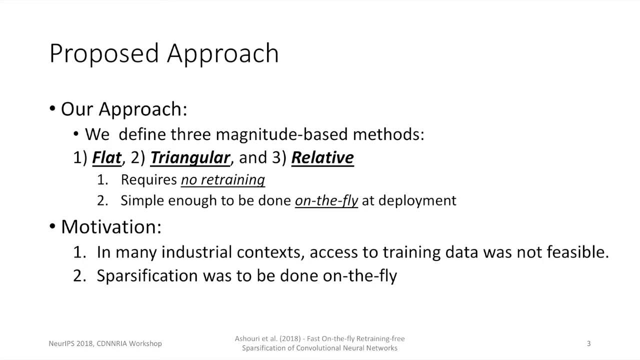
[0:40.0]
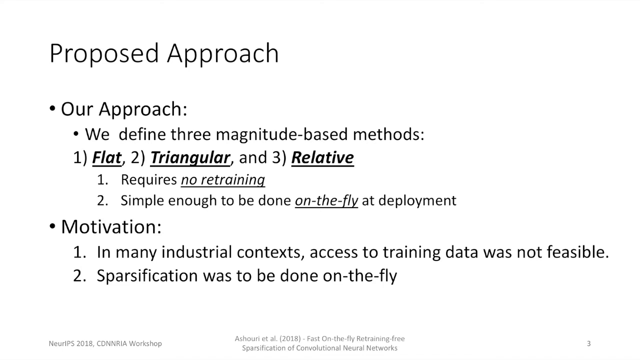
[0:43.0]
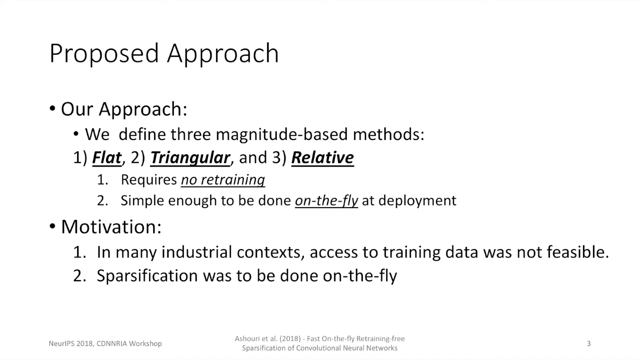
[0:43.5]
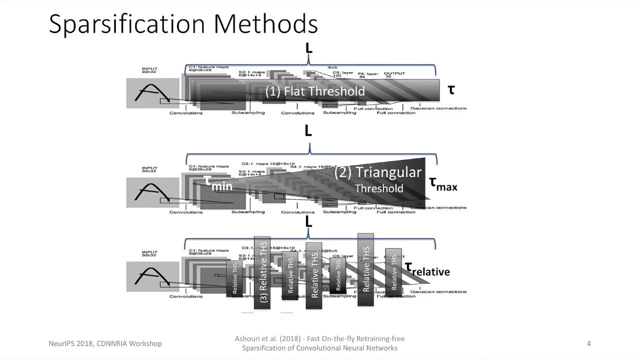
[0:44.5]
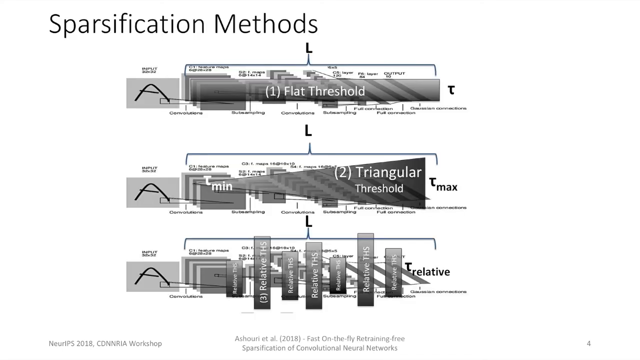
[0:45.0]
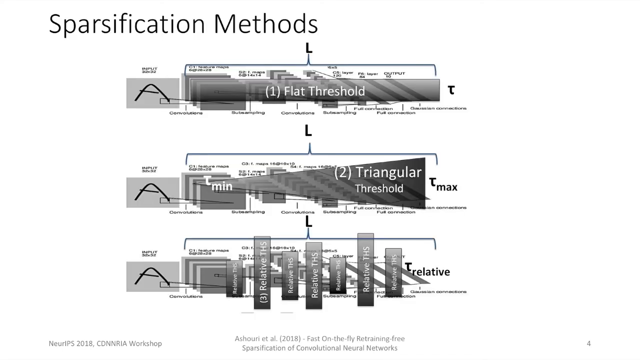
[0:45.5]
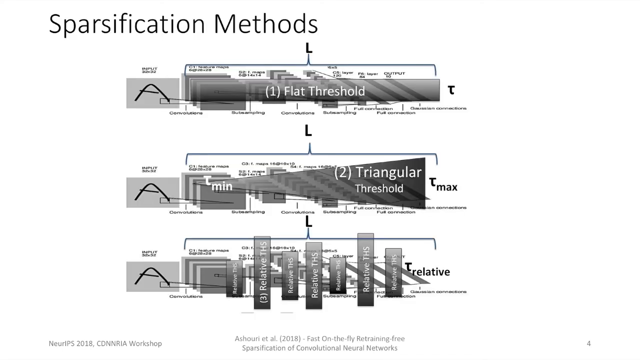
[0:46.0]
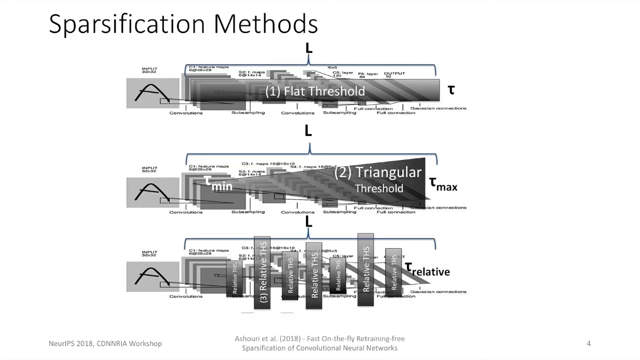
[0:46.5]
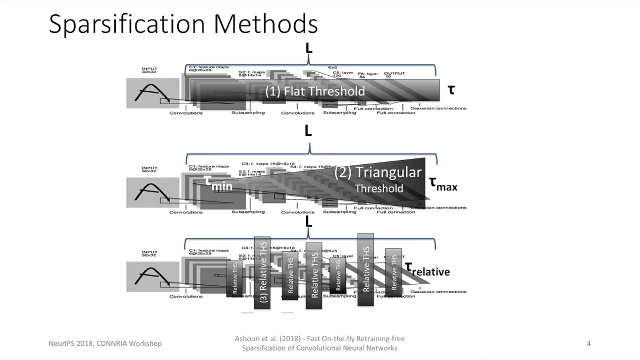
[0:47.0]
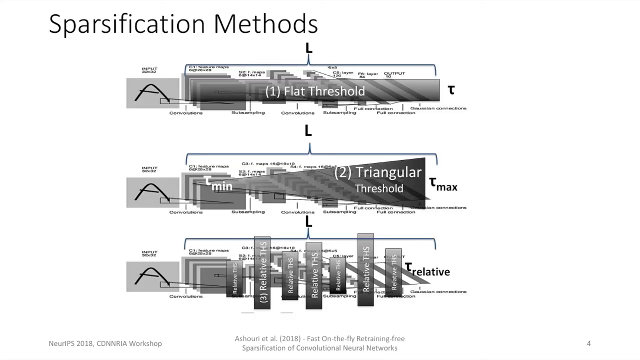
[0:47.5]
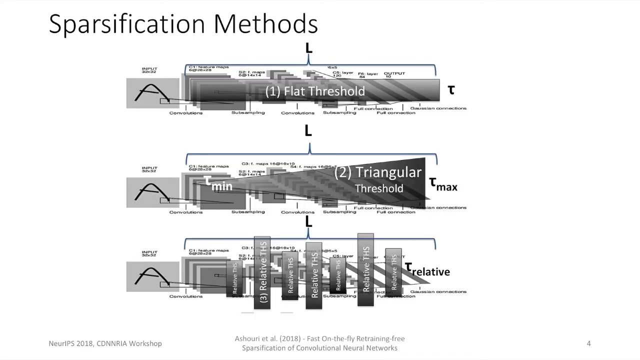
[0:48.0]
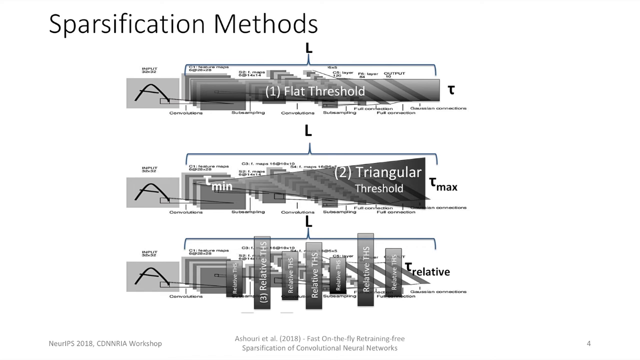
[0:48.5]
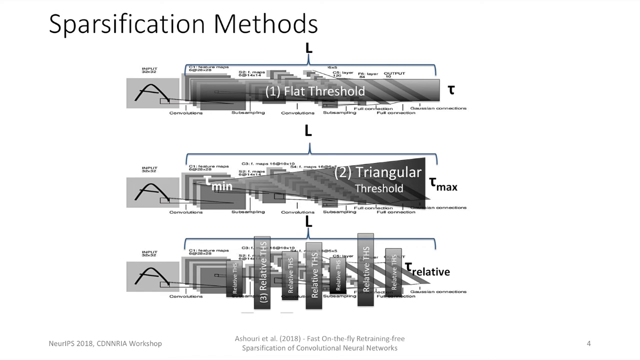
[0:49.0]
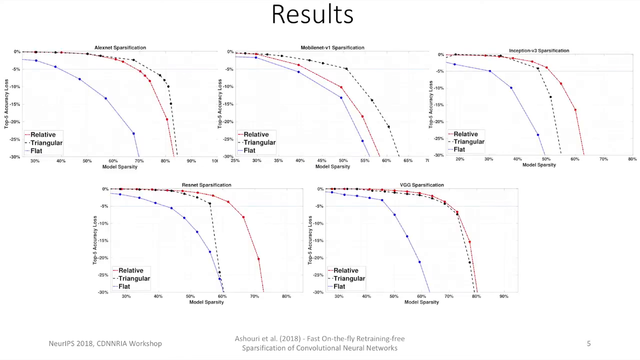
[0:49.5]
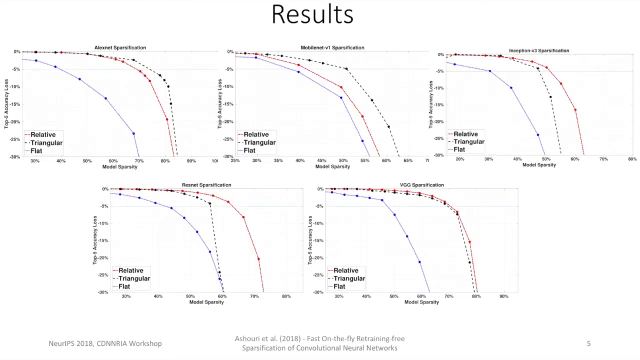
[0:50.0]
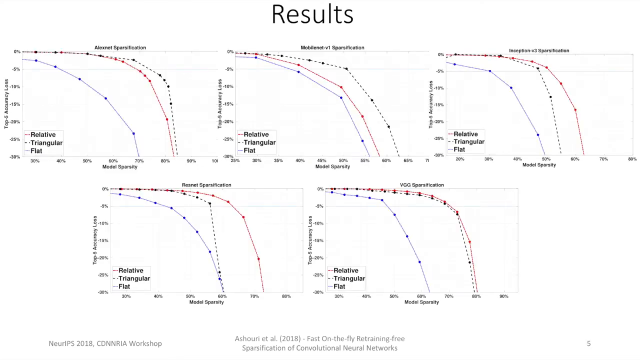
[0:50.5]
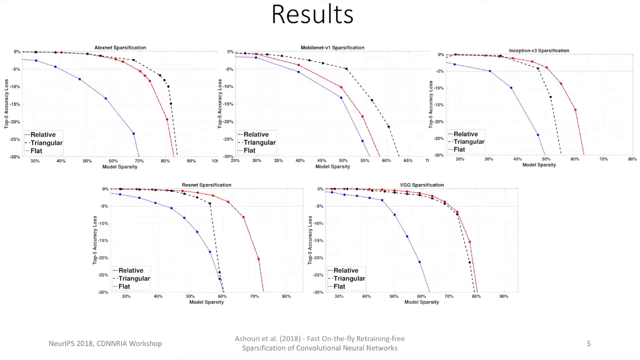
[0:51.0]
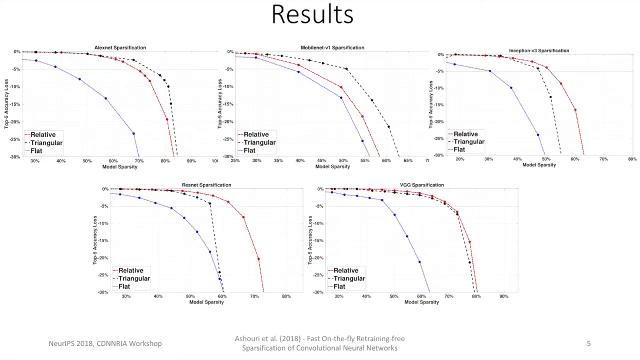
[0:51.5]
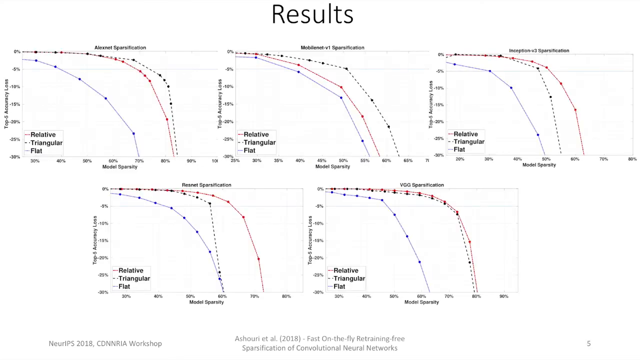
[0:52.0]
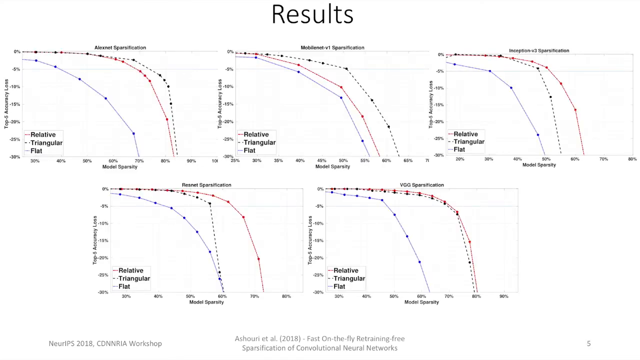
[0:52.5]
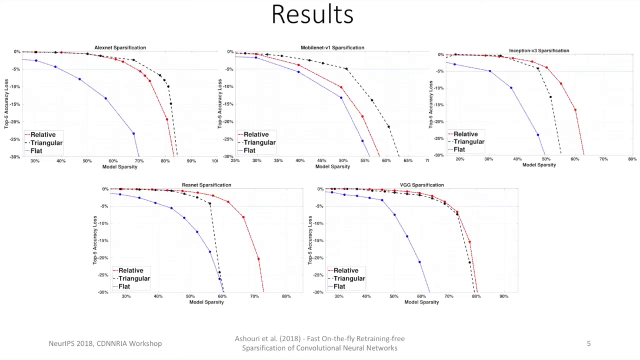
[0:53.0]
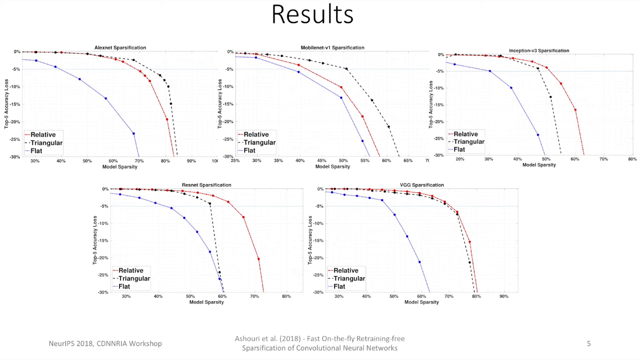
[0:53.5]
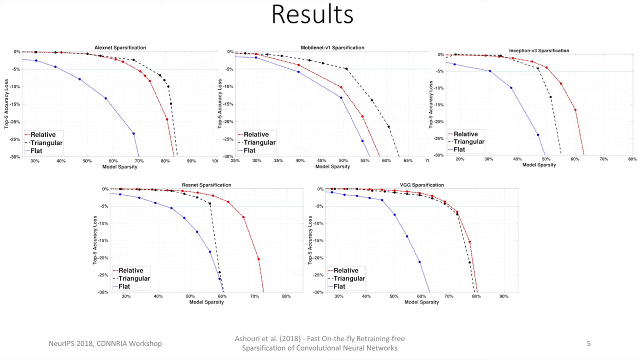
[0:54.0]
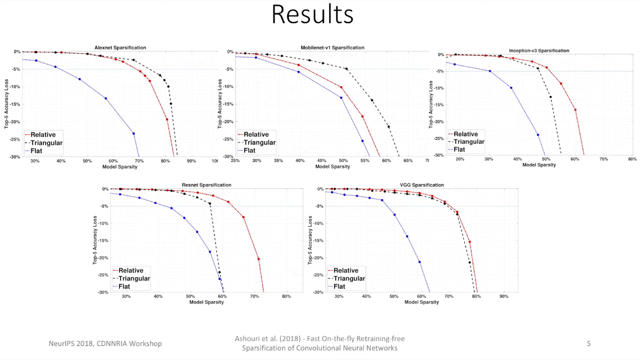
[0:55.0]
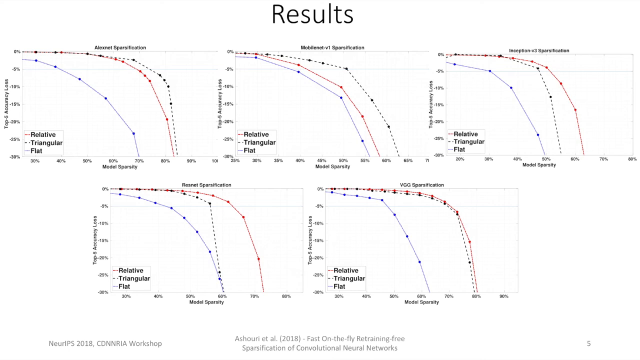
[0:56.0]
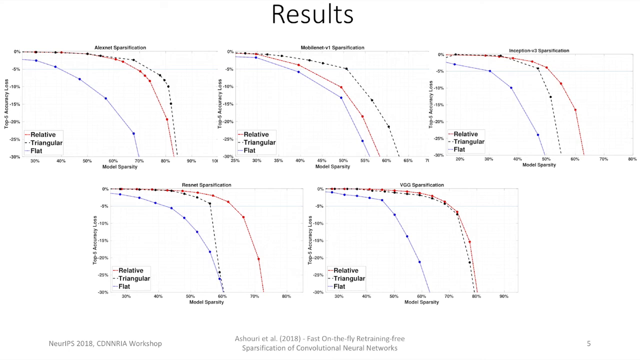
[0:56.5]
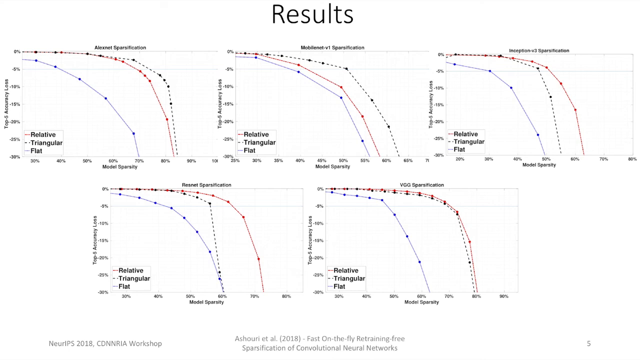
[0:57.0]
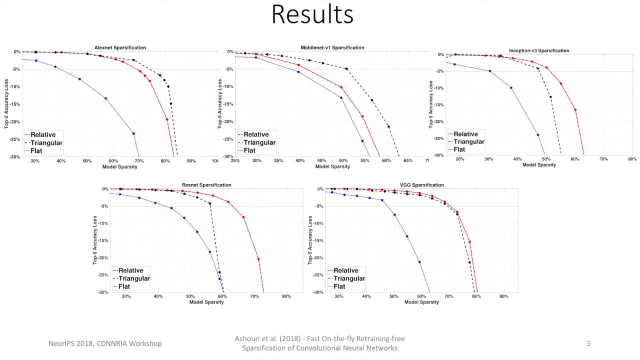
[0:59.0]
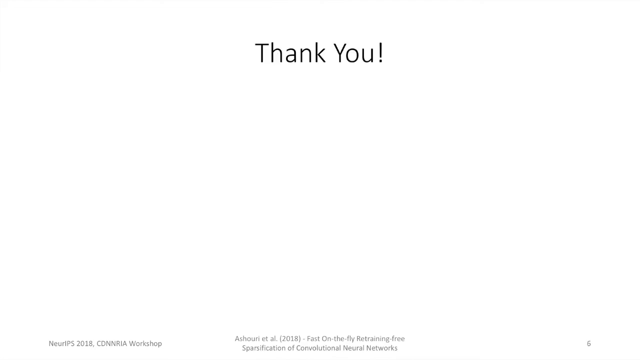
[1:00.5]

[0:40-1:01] A page of proposed approaches lists three magnitude-based methods: flat, triangular and relative. Their benefits are that they require no retraining and are simple enough to be done on the fly at deployment. The motivation also appears: in many industrial contexts access to training data was not feasible, and specification was to be done on the fly. The video then moves to the different specification methods used: the flat threshold, the triangular threshold and the relative threshold. The flat threshold is a rectangular shape that does not change in width throughout its entire length. In the triangular threshold, a black triangle is superposed on top of the data. In the relative method, different vertical triangles of varying lengths and widths appear throughout the data. The video then shows five different graphs with blue, green and red lines depicting various results of the different methods.